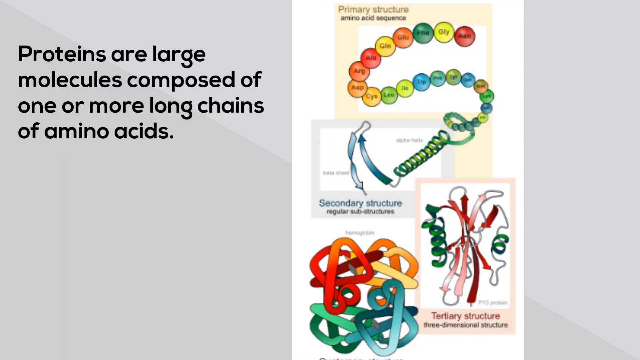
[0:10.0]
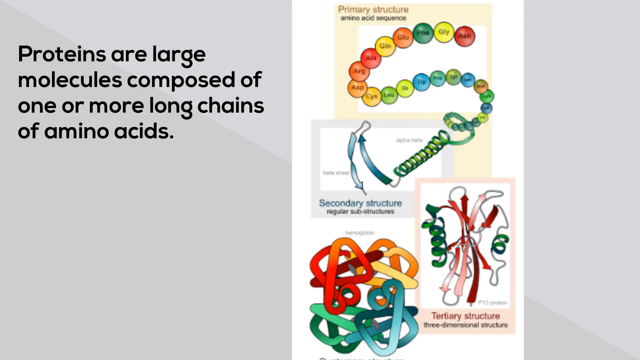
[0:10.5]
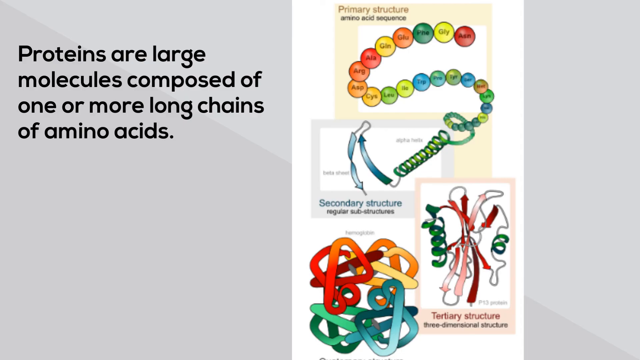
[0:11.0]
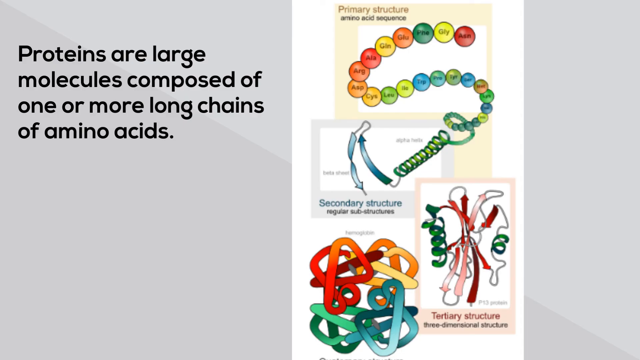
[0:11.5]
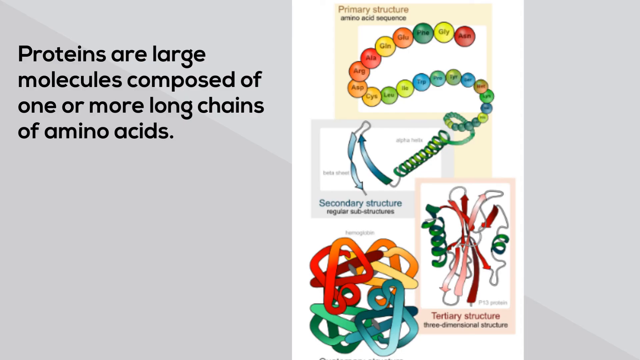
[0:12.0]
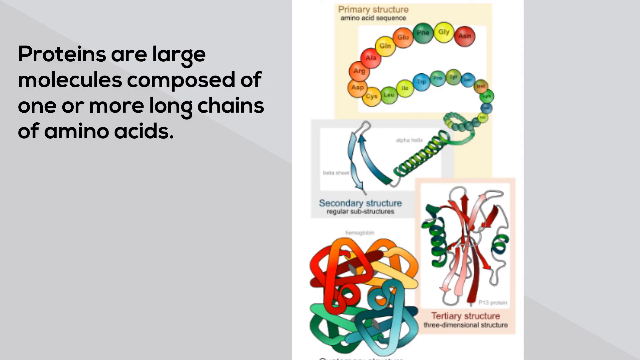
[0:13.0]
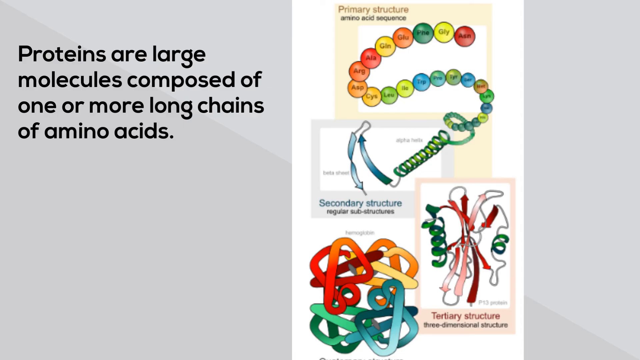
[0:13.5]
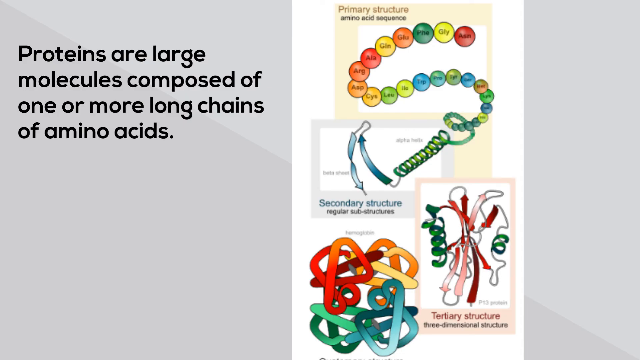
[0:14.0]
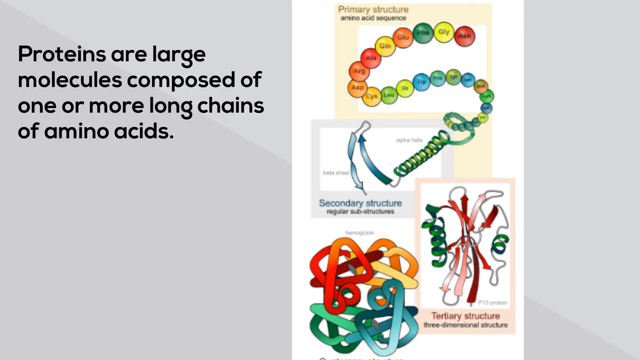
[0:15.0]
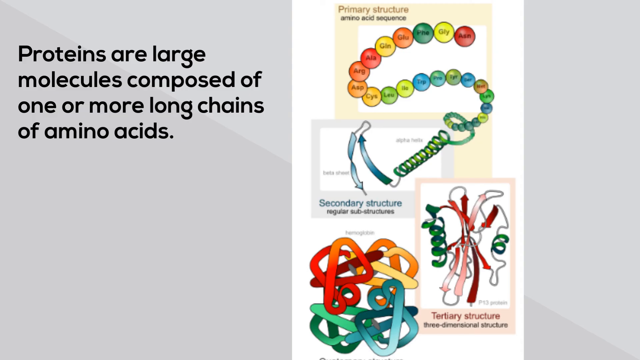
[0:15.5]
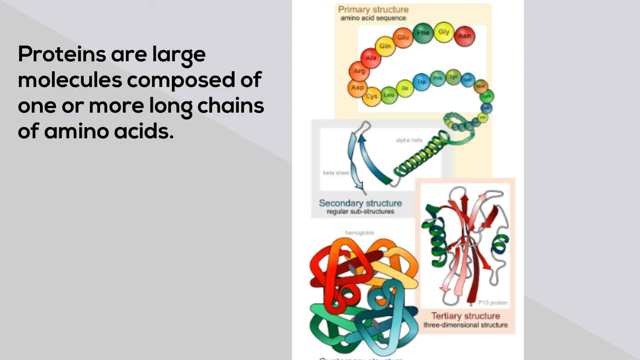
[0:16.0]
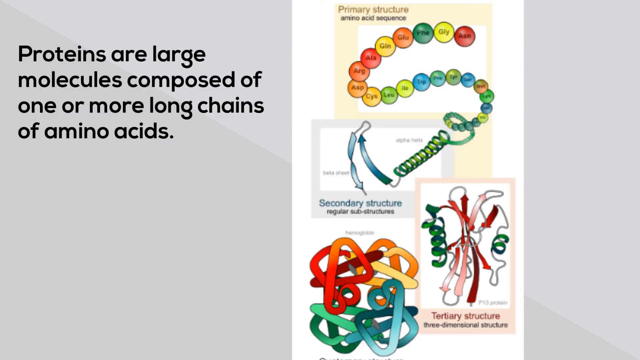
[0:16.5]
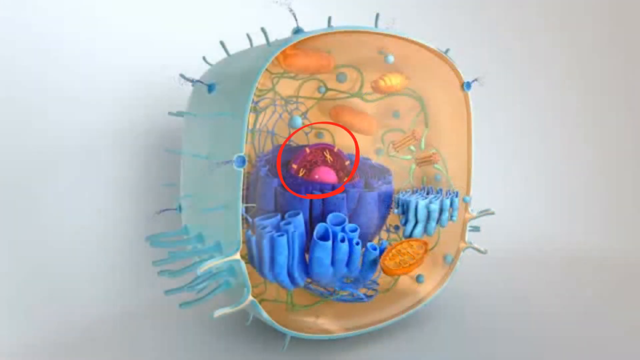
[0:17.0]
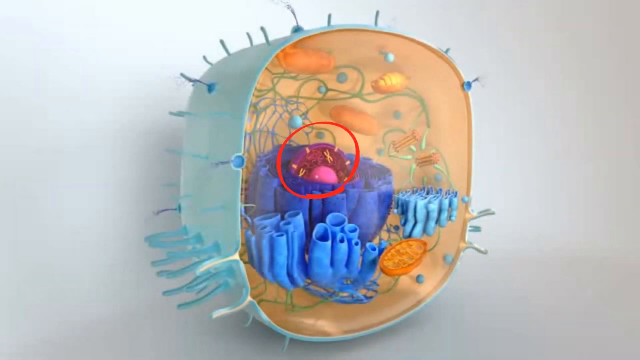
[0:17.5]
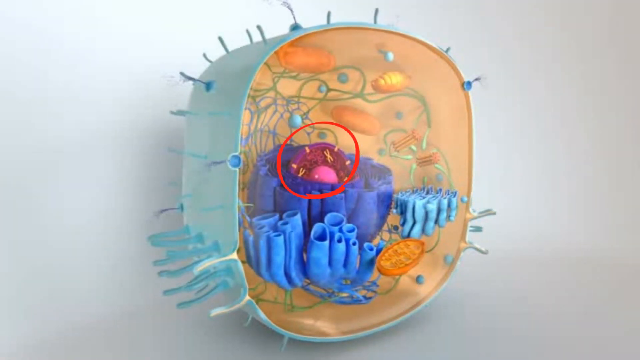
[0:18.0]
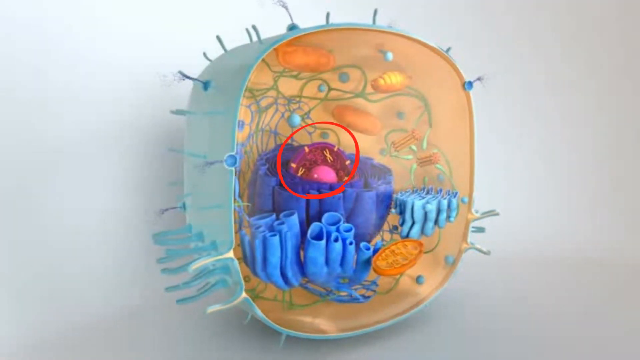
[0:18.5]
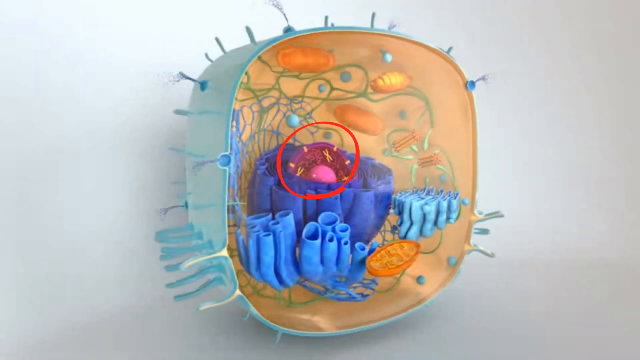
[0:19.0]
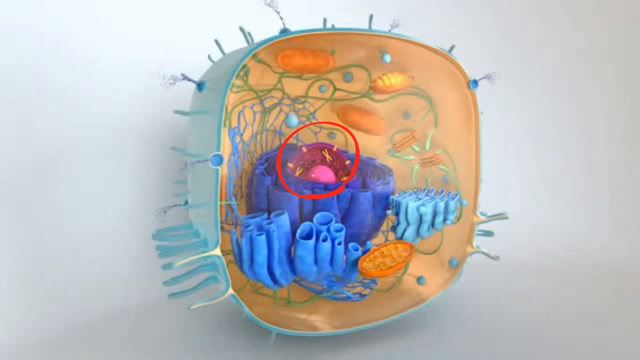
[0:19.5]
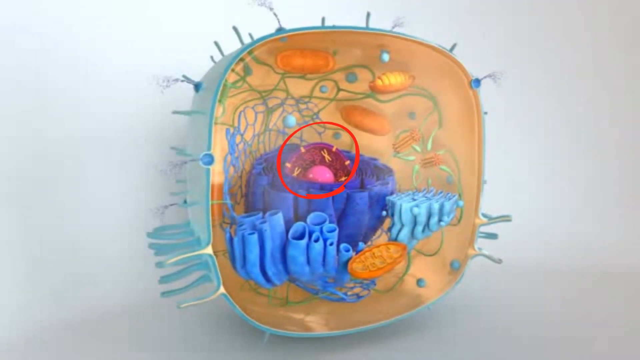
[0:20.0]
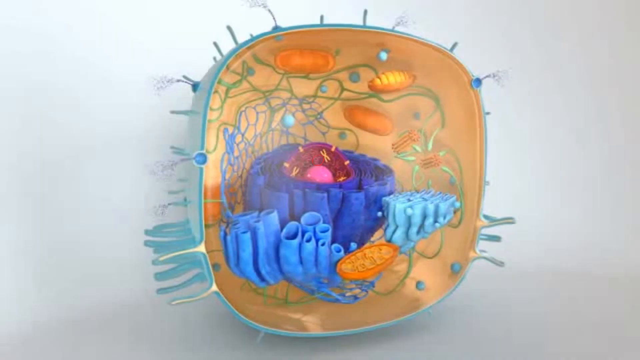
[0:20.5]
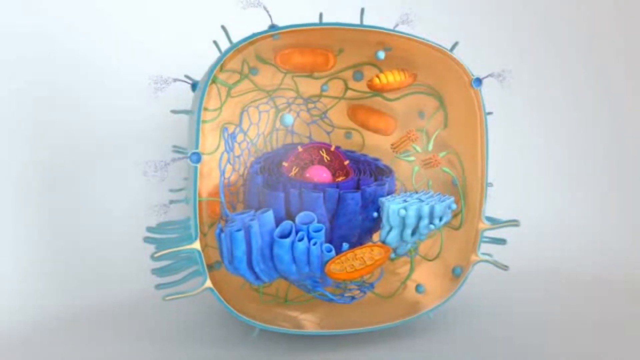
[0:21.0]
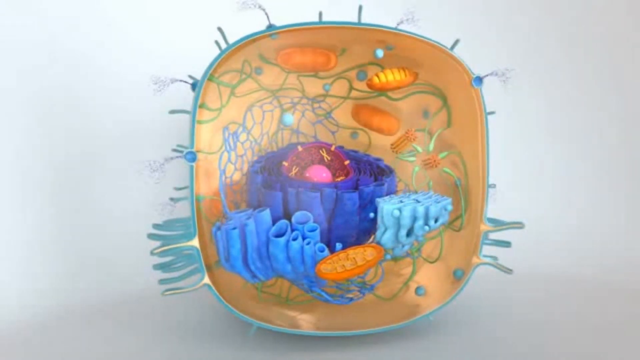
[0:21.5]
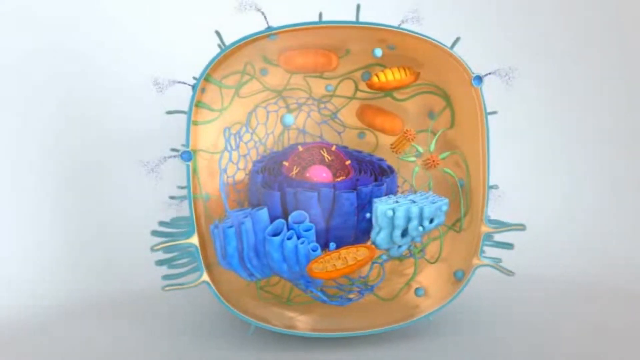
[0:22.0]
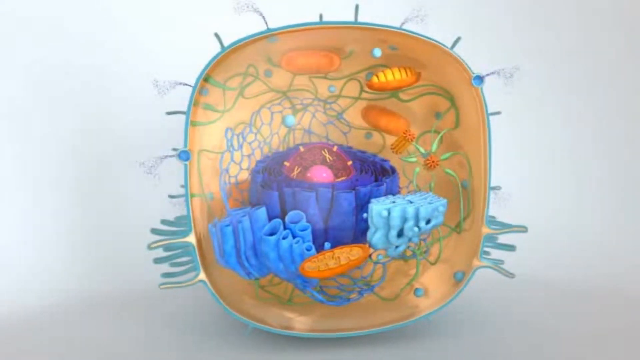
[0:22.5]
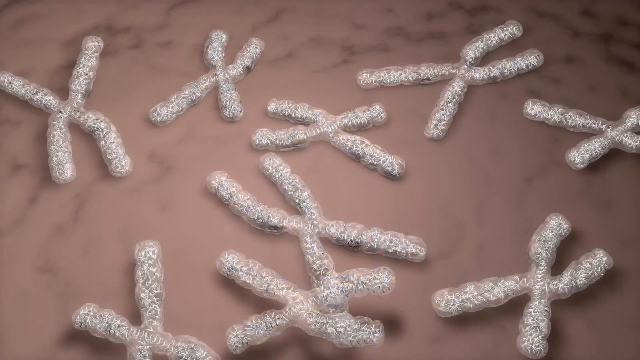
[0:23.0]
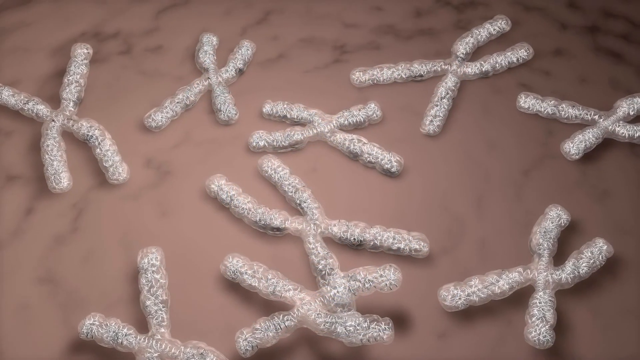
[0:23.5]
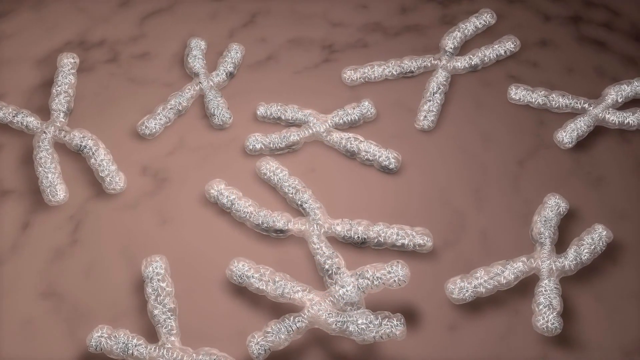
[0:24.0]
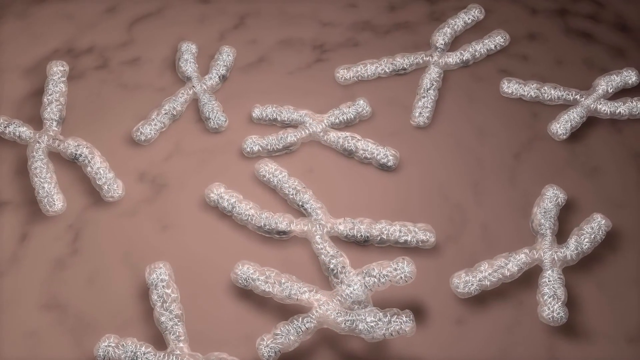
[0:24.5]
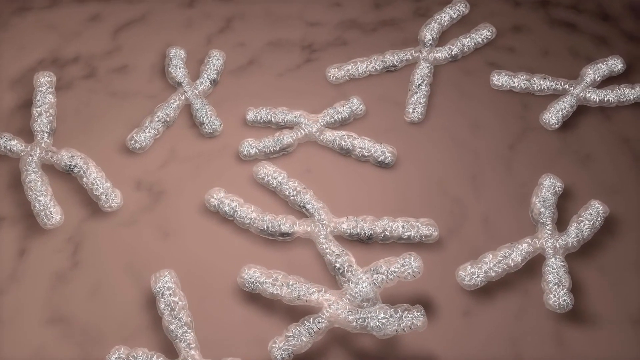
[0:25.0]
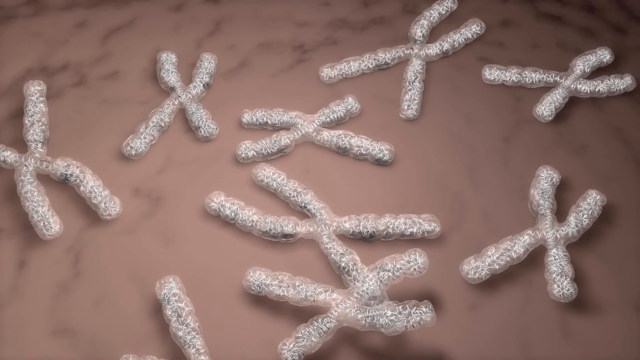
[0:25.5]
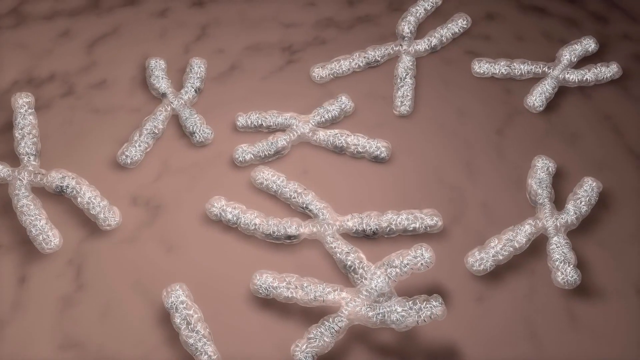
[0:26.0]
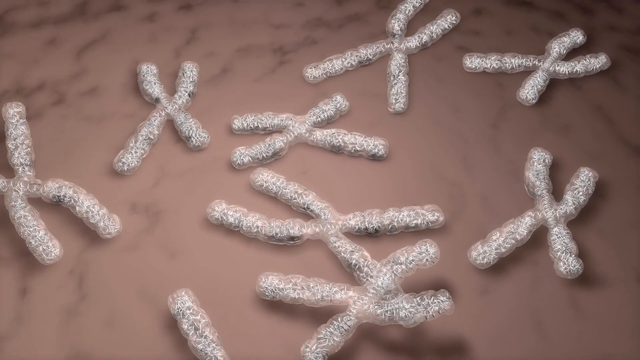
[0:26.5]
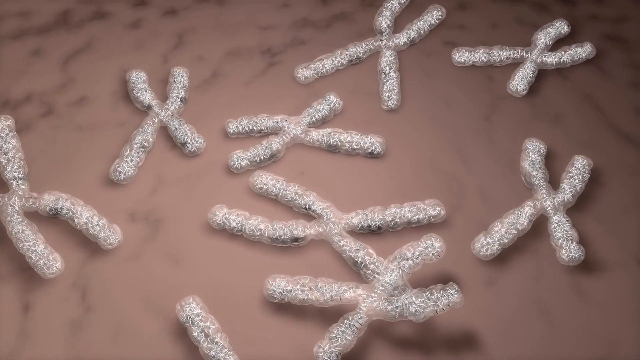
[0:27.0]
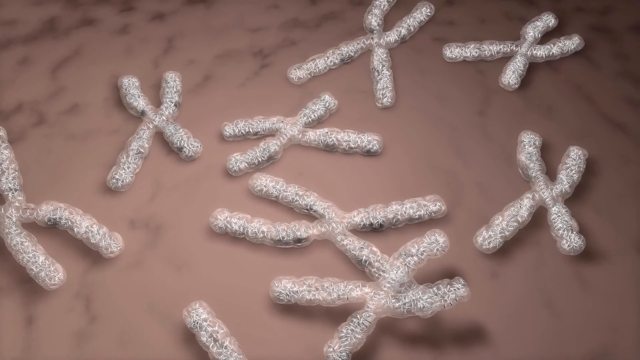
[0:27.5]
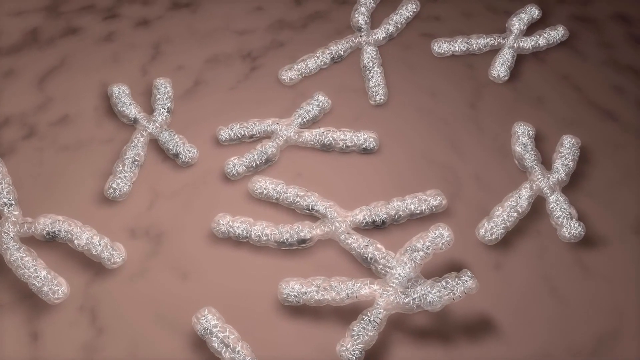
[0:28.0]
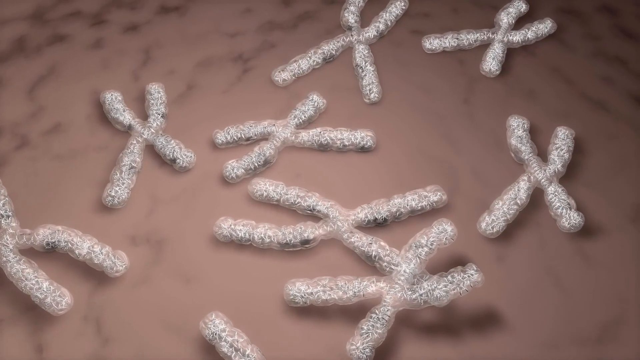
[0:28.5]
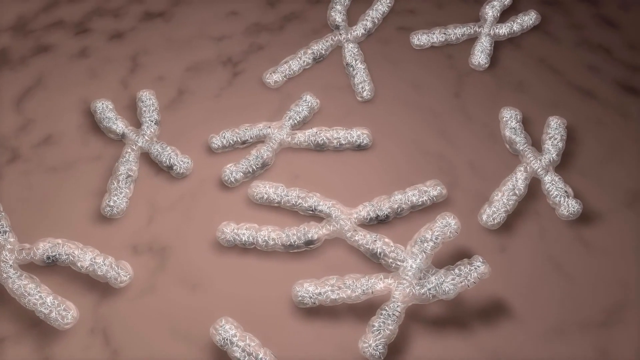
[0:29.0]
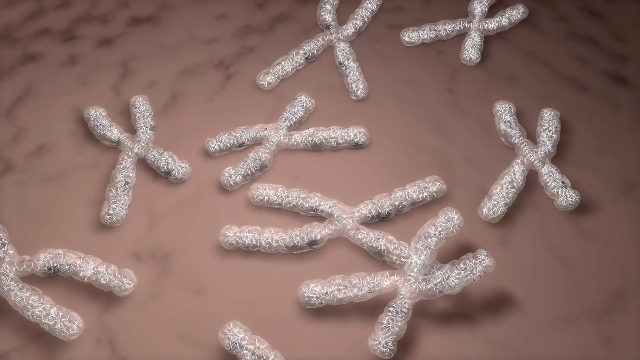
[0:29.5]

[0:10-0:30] The same protein slide remains on screen. In the primary structure illustration, each amino acid is color-coded and shaped like a round bead; some of the abbreviations are "CYS" and "GLY". The slide also shows two pictures of the tertiary, or three-dimensional, structure of a protein, in which each quadrant is color-coded: the upper-left quadrant is red, the upper-right is orange, the lower-left is green, and the lower-right is purple. Next, a 3D animation of a somatic cell appears with the nucleus circled in red. The endoplasmic reticulum, smooth endoplasmic reticulum, Golgi complex, lysosomes, mitochondria and ribosomes are shown, along with chromosomes floating on the nucleus. Then about five or six chromosomes are shown laid out, and the camera spins clockwise.